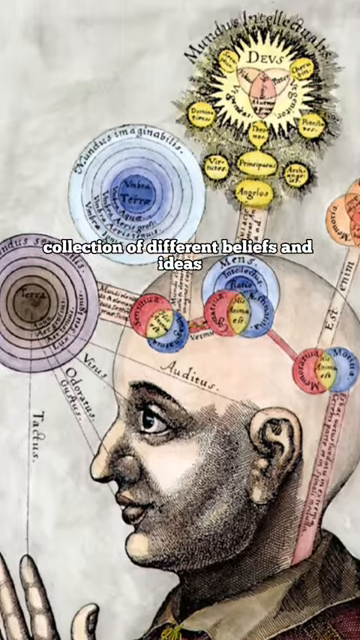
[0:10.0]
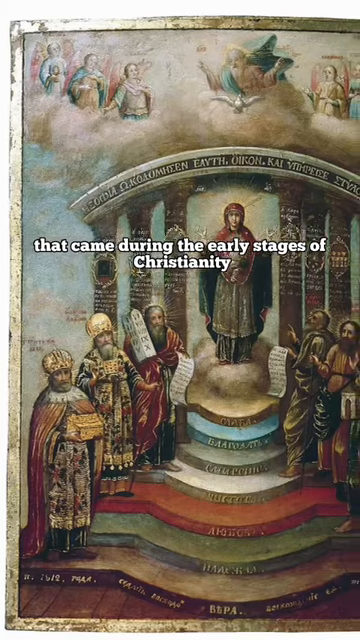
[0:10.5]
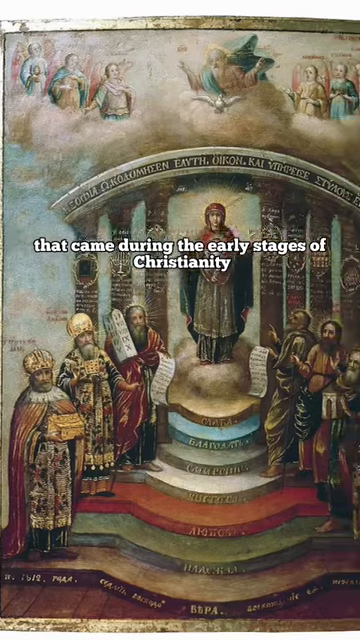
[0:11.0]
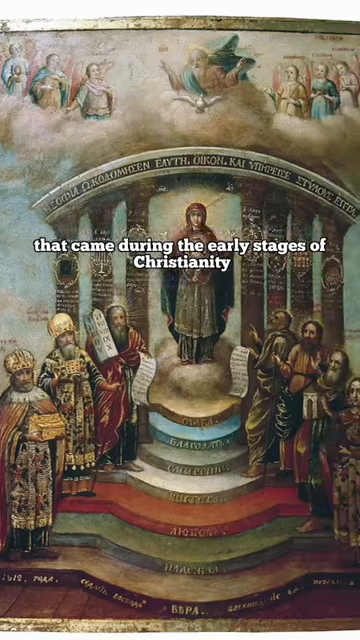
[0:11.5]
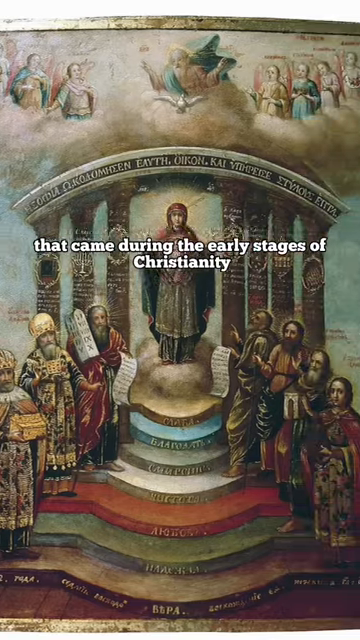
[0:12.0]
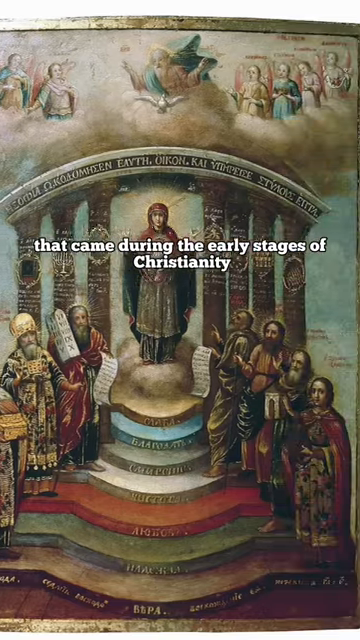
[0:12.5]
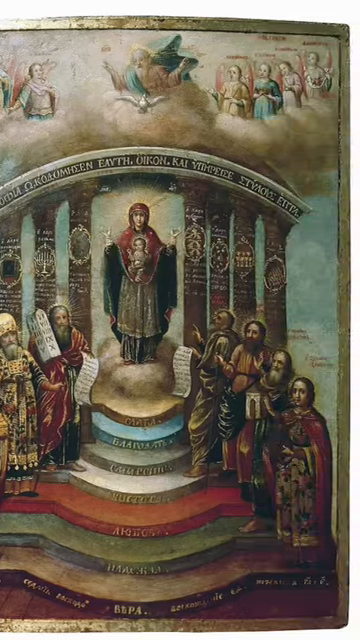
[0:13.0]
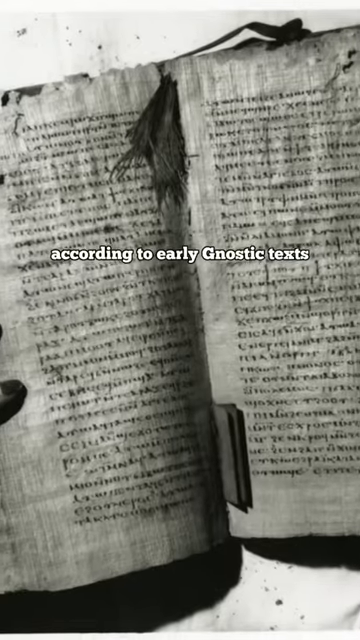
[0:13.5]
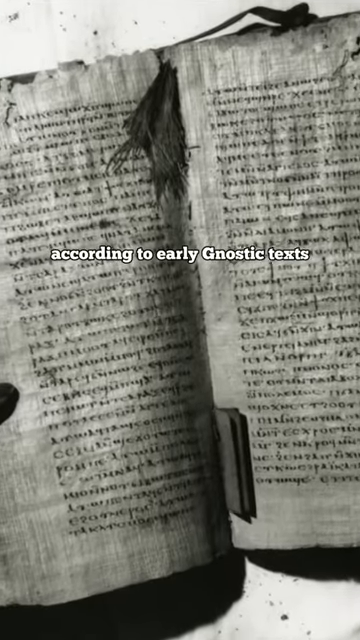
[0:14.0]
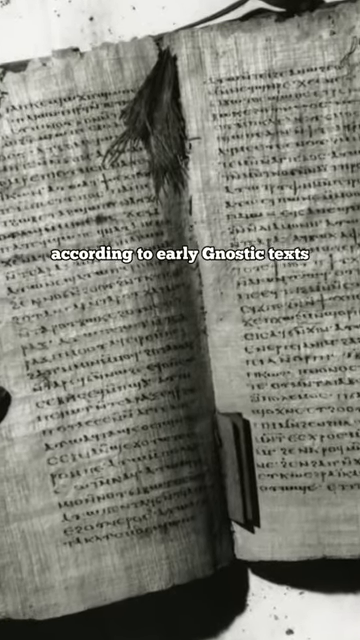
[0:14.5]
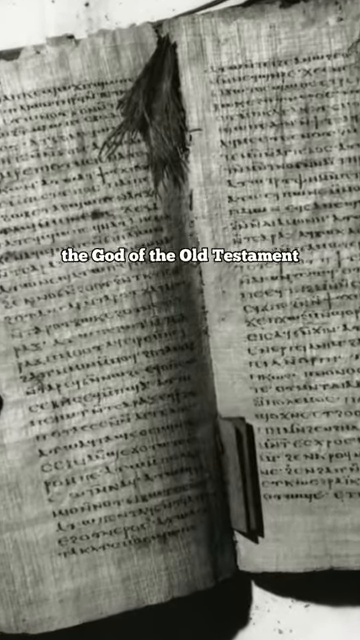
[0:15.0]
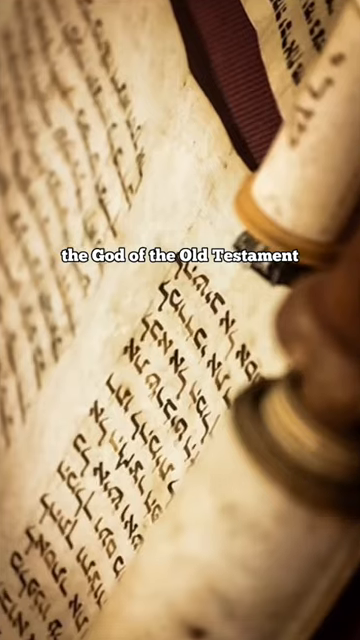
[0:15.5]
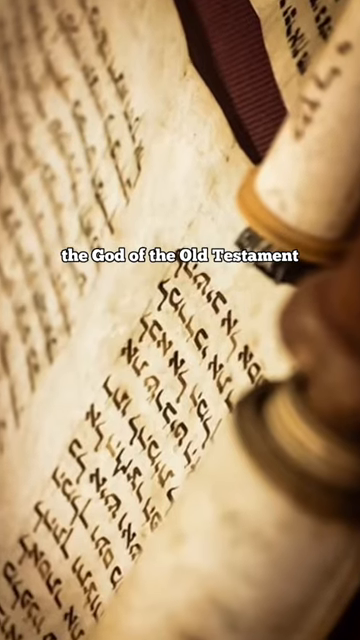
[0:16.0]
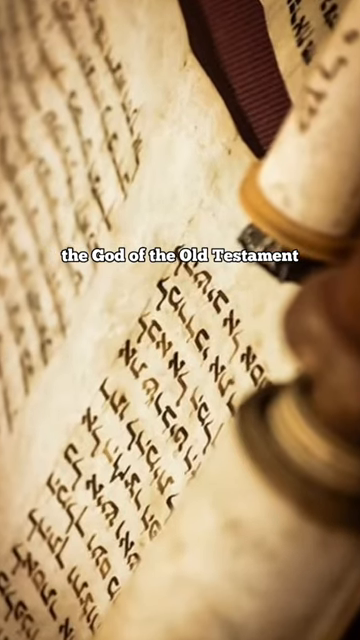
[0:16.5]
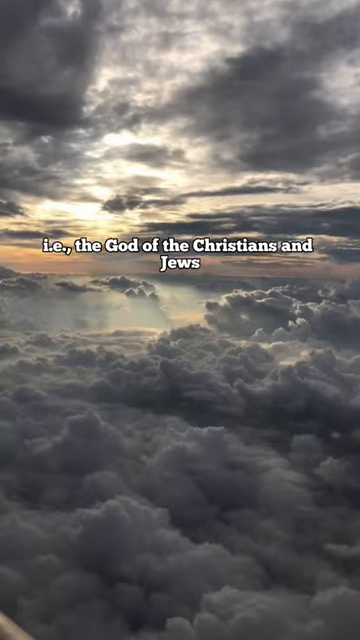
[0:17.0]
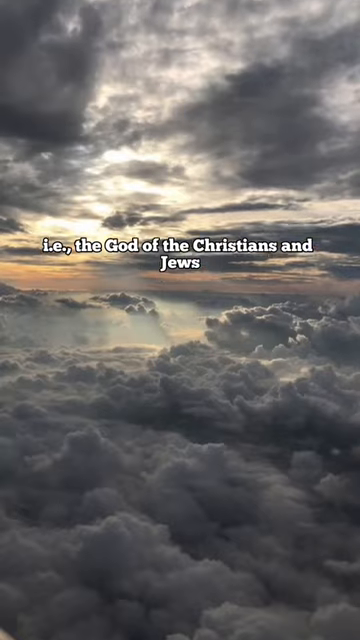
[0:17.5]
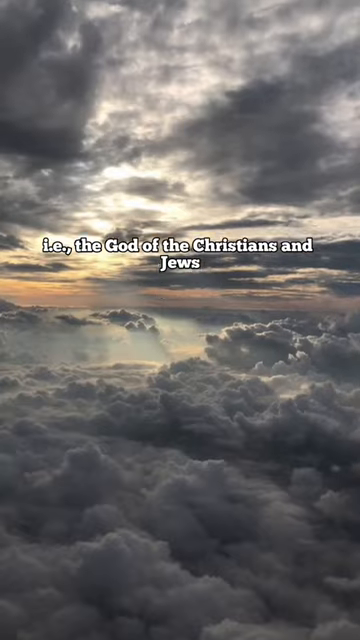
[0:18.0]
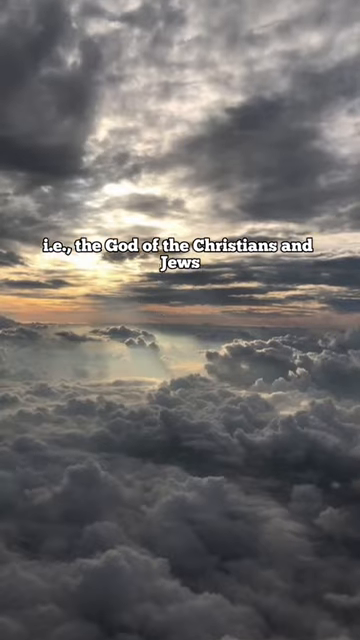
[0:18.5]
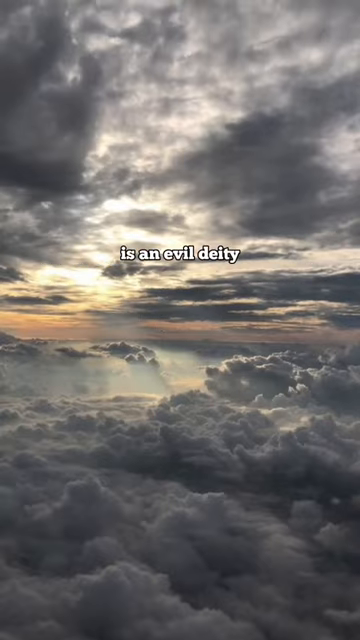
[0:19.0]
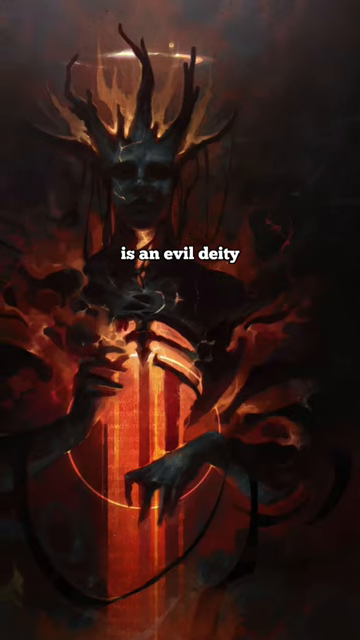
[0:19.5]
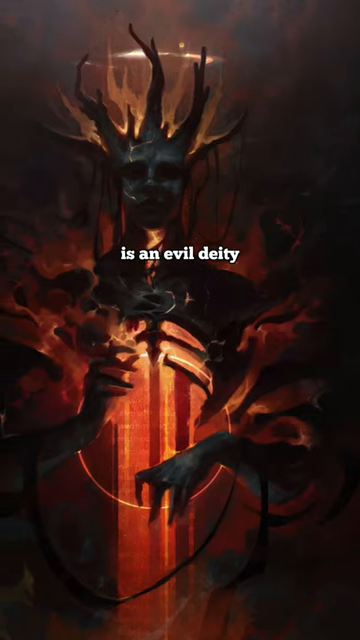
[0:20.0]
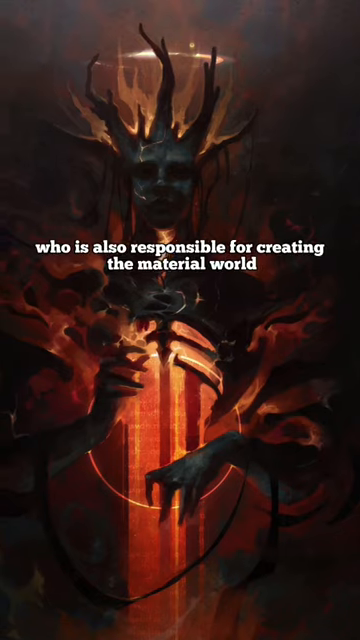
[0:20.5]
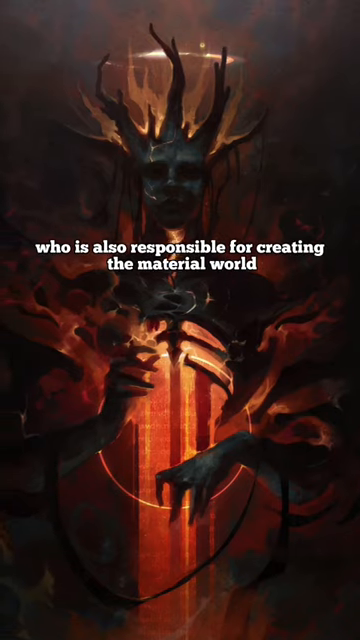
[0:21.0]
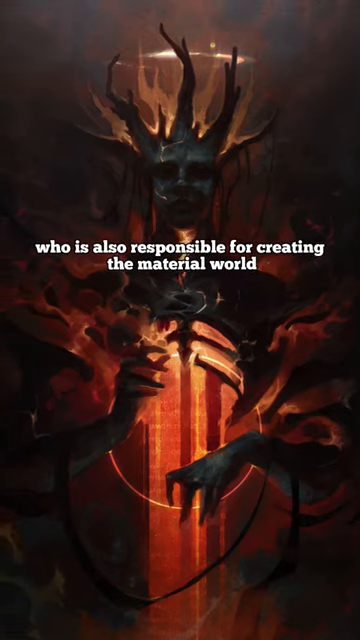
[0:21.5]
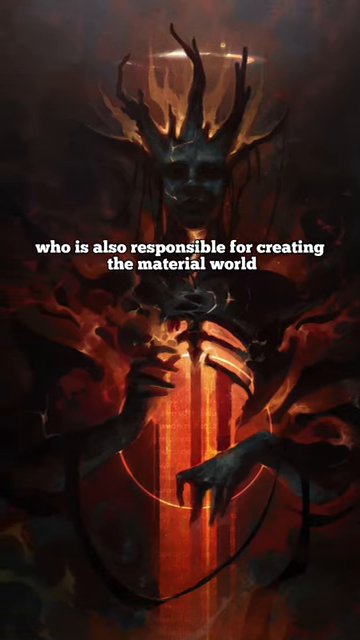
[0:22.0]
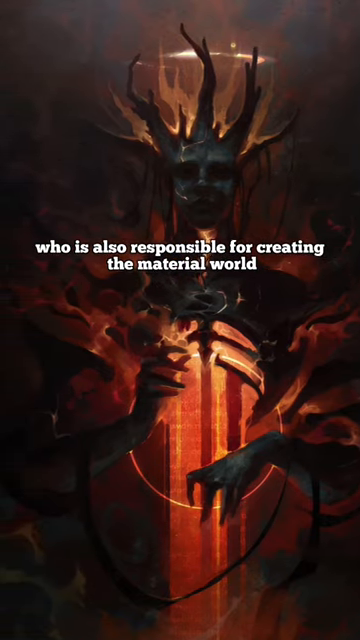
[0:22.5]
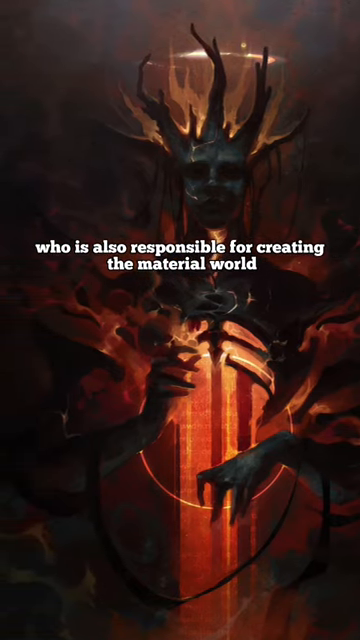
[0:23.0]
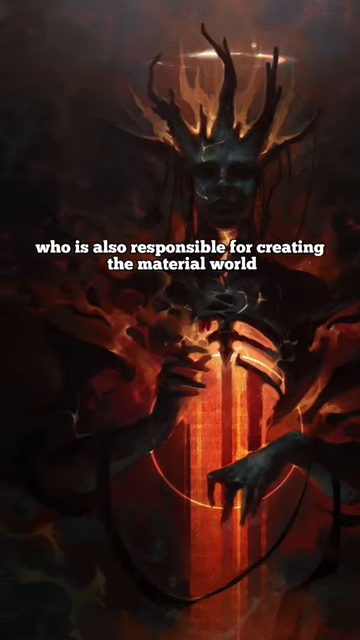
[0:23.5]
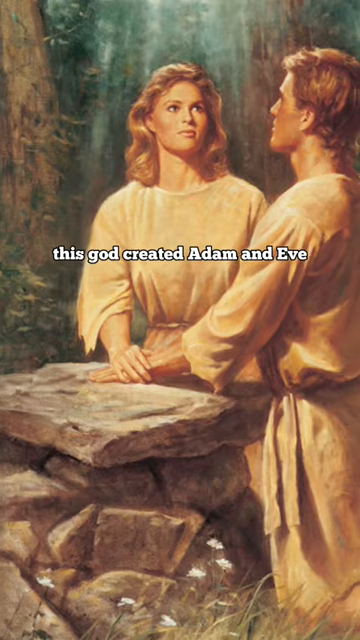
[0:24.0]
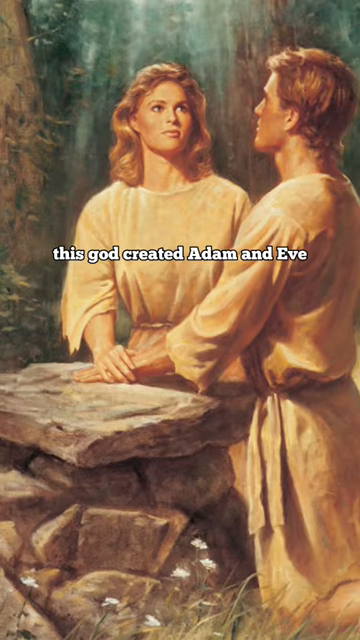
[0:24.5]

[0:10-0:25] Text goes on to state that Gnosticism is a collection of ideas that came before Christianity, and that according to early Gnostic texts, the God of the Old Testament, the God of the Christians and Jews, is an evil deity who is also responsible for creating the material world and who also created Adam and Eve. The visuals begin with a picture of Christian disciples with Jesus in the middle, standing up on a platform. Next come early Gnostic texts: old books with foreign writing on them, one being Hebrew, and a Hebrew scroll. Then there is a picture of gray clouds in the sky with a little bit of sun breaking through, followed by a scary picture of the devil with horns, all in black, behind a lighted candle, with hands that have long fingernails. The last image shows Adam, who has brown hair, and Eve, who has blonde hair, standing facing each other in a garden next to a stone, with Adam's hand on top of hers.